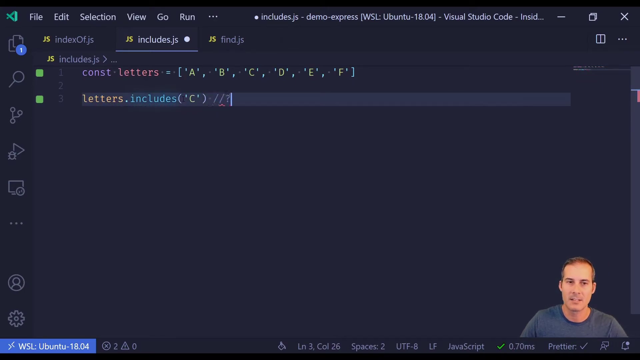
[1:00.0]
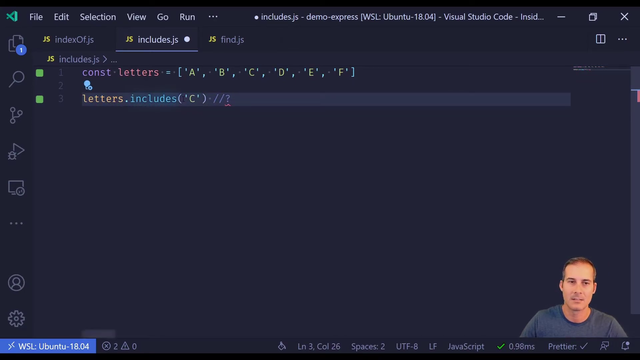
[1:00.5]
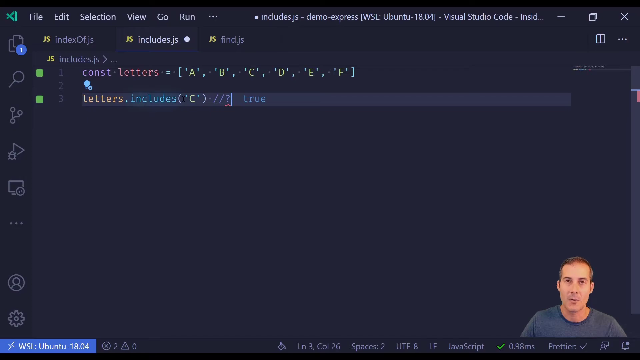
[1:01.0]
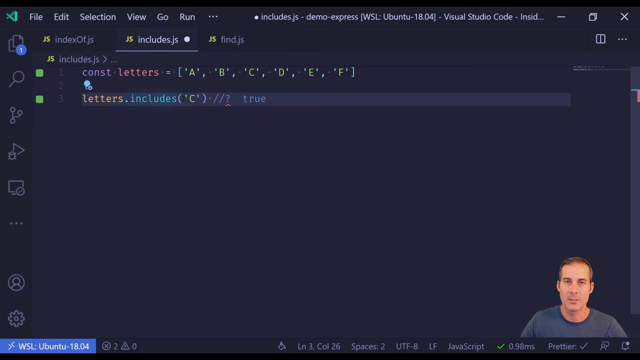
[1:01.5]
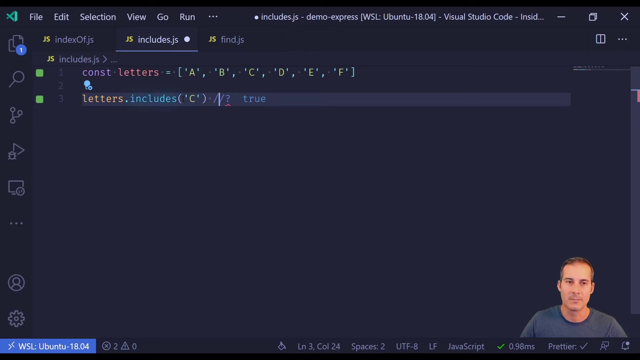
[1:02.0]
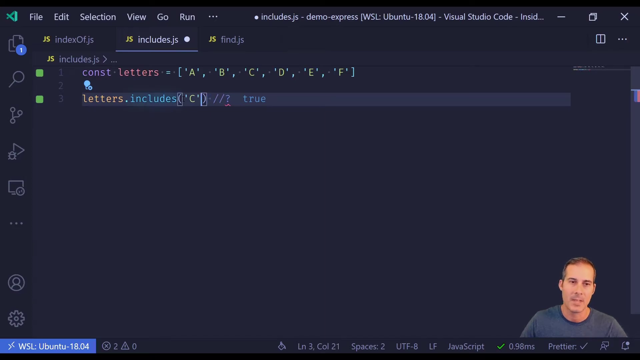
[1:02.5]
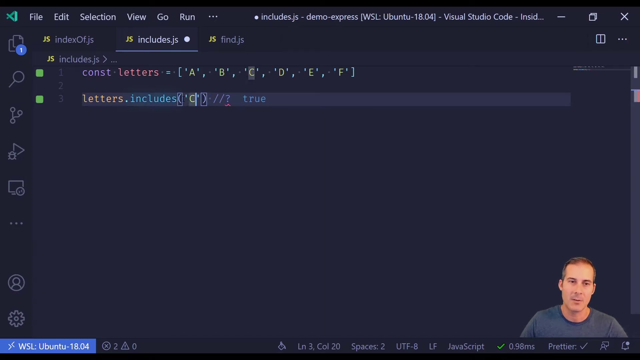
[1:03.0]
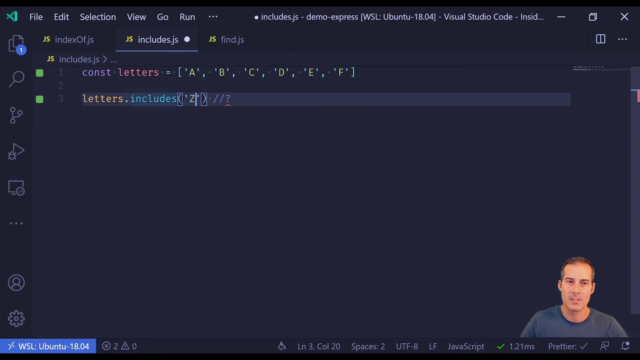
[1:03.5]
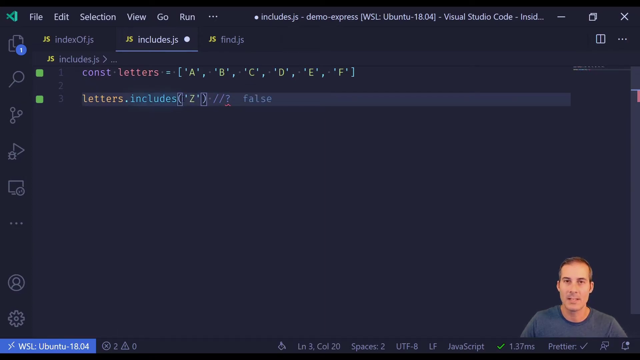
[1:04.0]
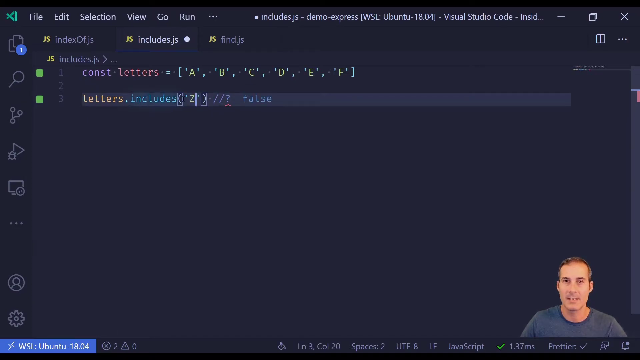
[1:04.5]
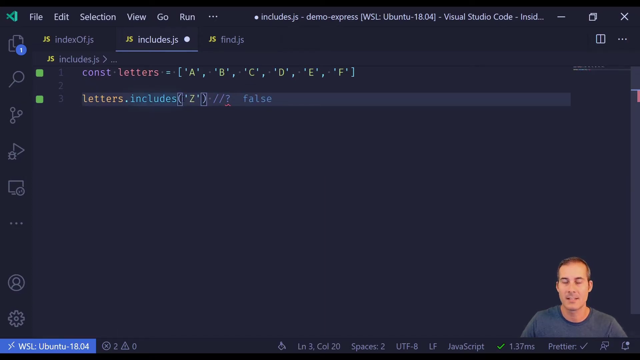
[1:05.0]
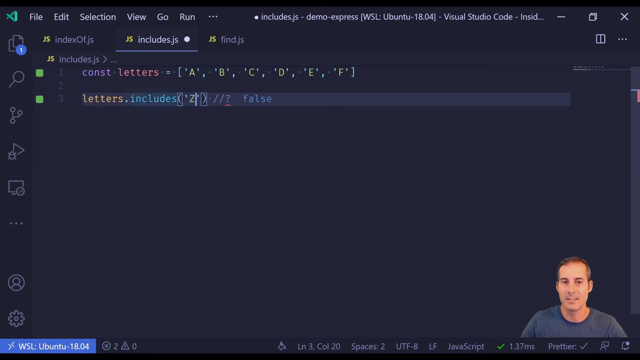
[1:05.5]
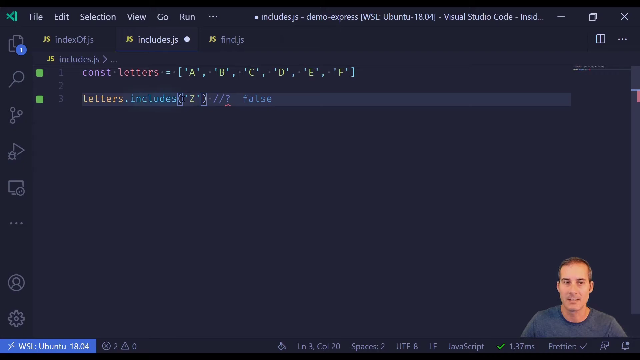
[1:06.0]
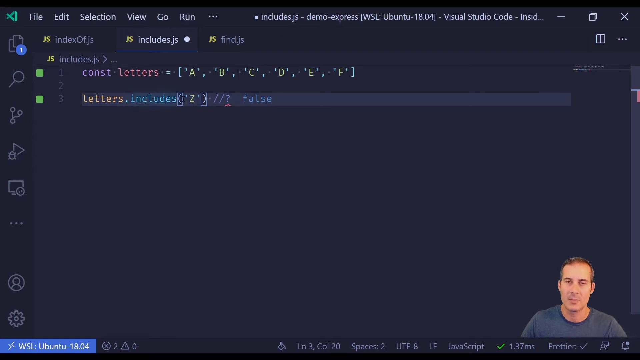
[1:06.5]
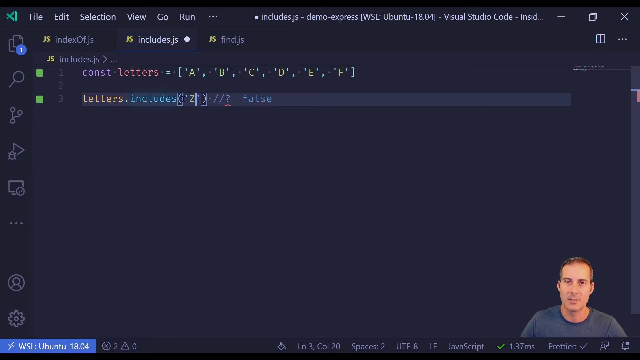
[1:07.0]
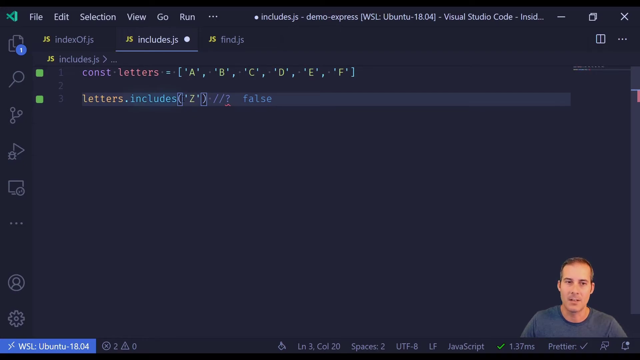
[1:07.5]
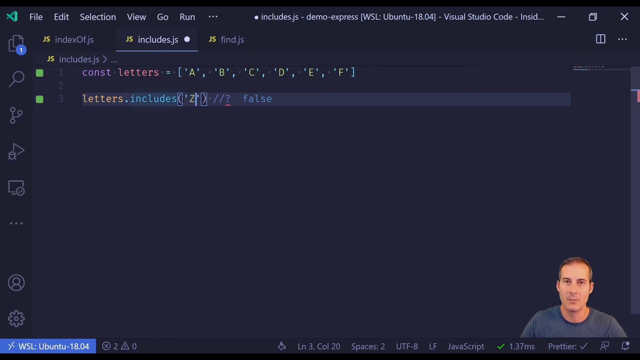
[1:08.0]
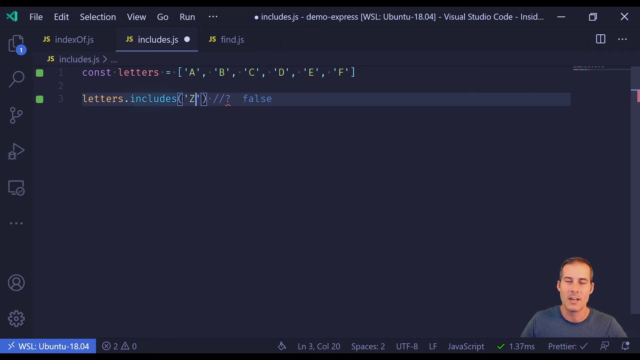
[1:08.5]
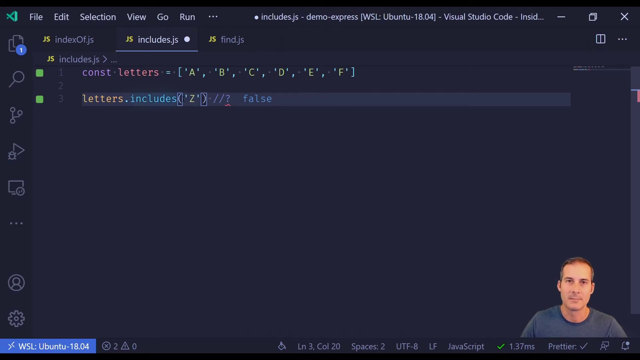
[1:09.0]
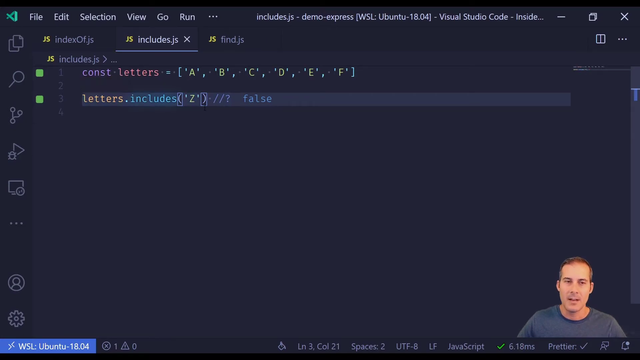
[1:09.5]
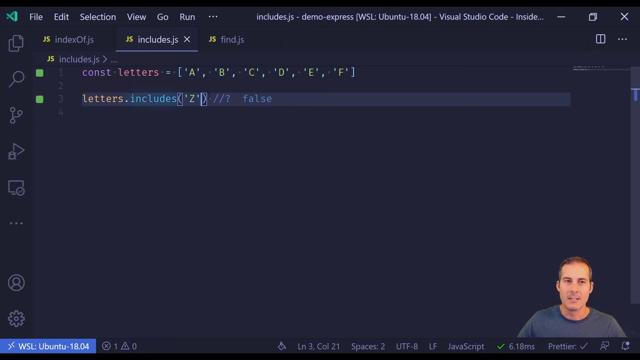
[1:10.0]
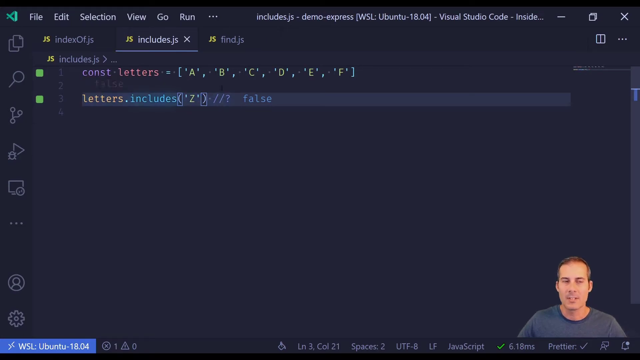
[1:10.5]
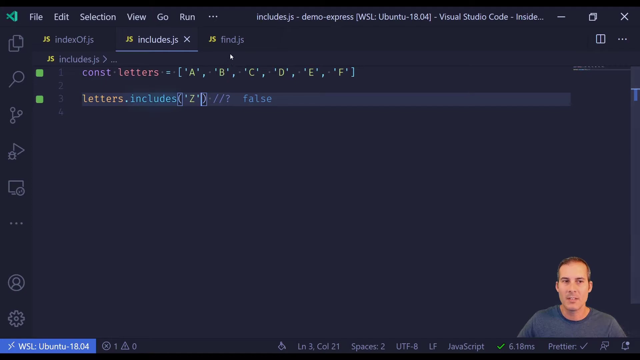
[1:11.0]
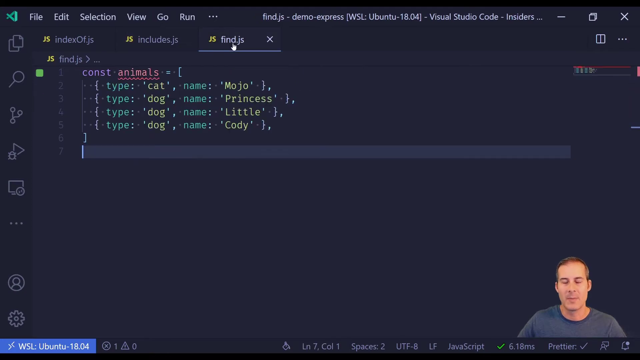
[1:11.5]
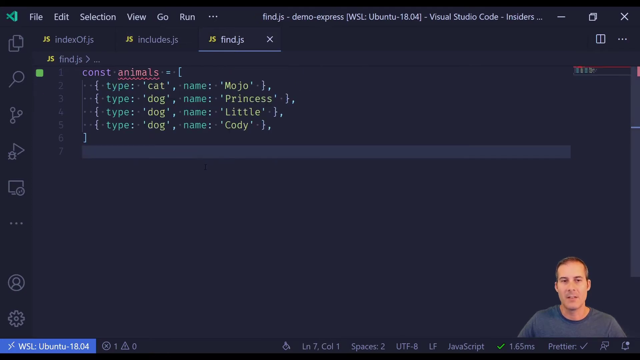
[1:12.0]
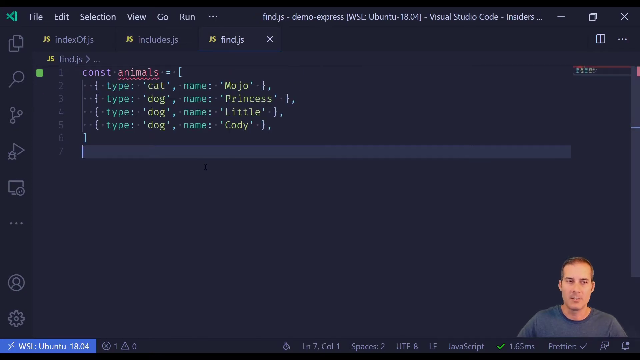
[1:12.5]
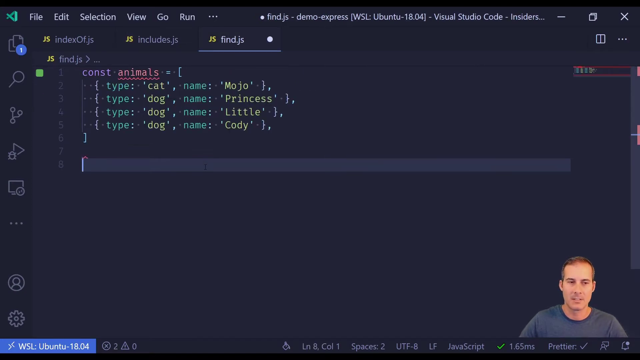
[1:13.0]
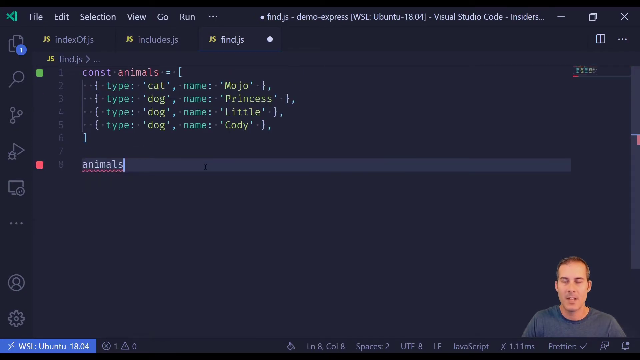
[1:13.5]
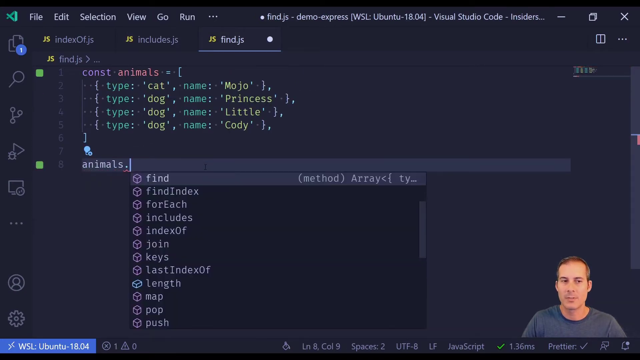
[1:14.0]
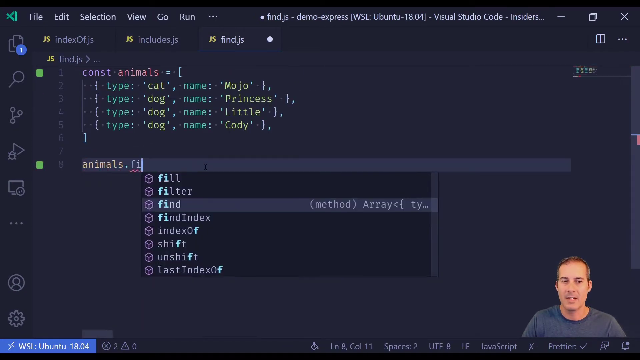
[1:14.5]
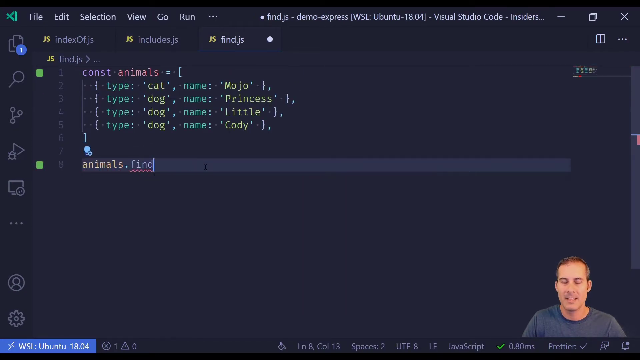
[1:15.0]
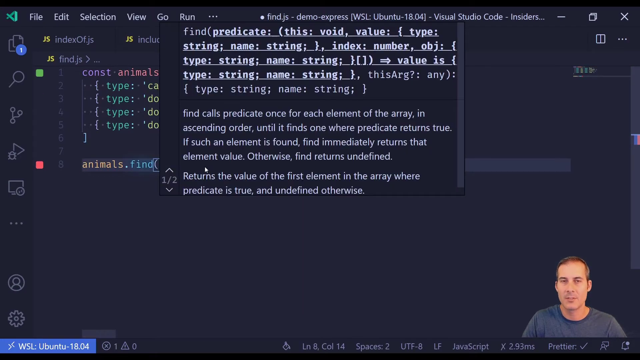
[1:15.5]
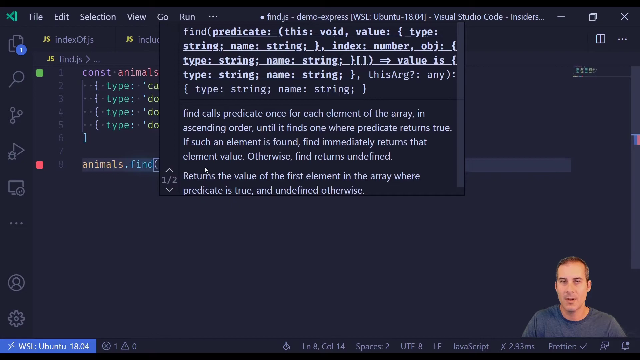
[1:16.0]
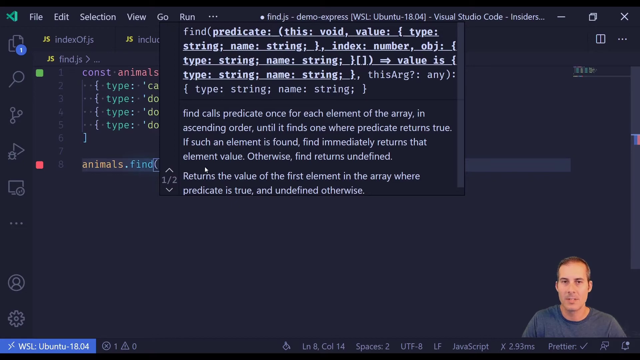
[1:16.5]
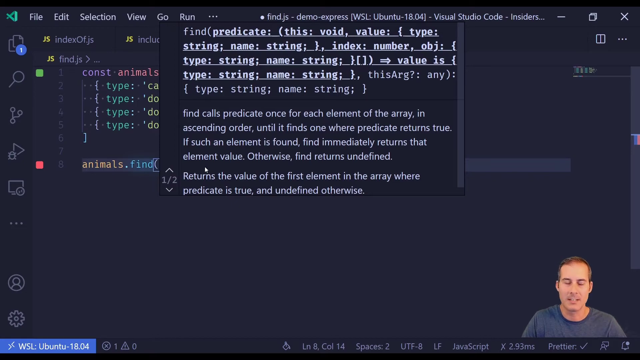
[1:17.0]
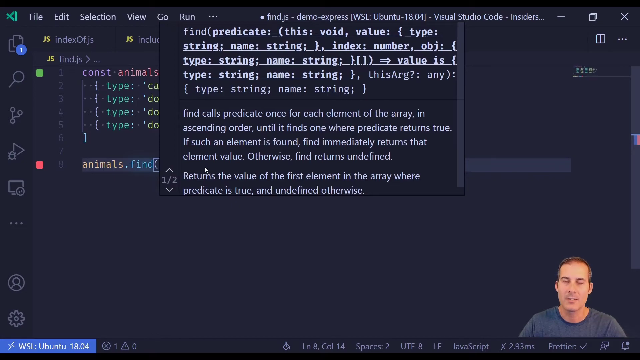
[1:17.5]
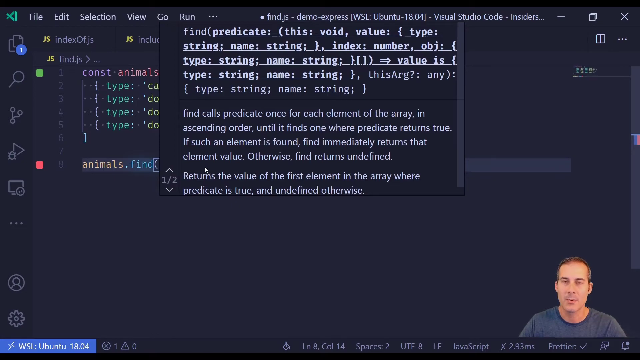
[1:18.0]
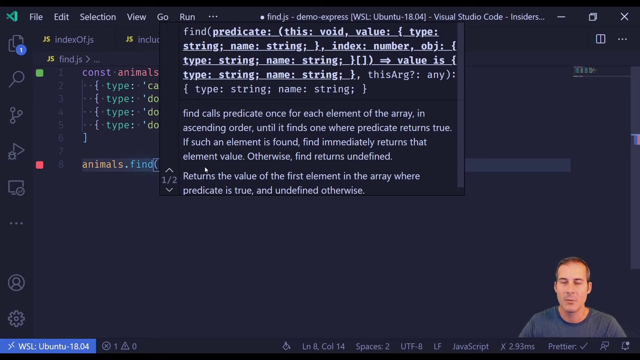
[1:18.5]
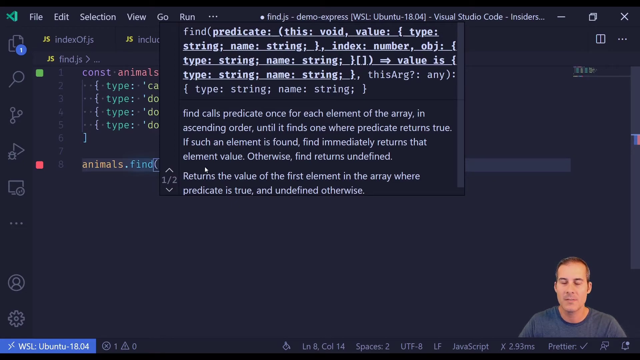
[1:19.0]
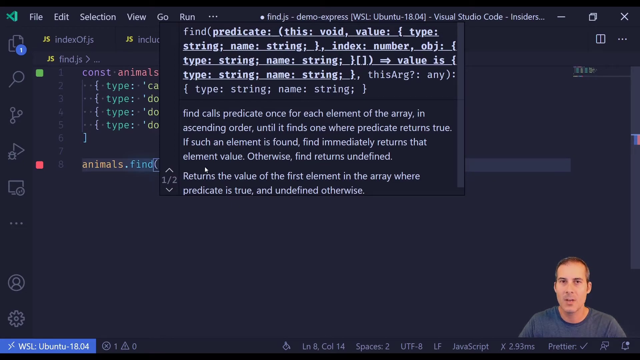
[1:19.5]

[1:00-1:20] Joel continues the lesson, with his image in the bottom right corner. He appears to be changing out one of the words: it looks like he searches for it, finds it, and makes the change. A drop-down box shows the text "find calls predicate once for each element of the array in ascending order until it finds one where the predicate returns true if such an element is found find immediately returns that element value. Otherwise find returns undefined returns the value of the first element in the array where predicate is true and undefined otherwise", describing the steps he is taking as he makes the changes.